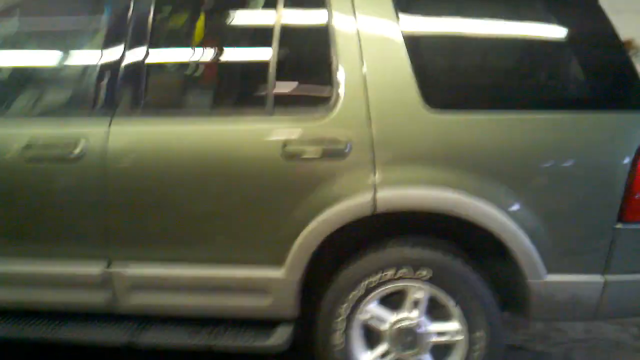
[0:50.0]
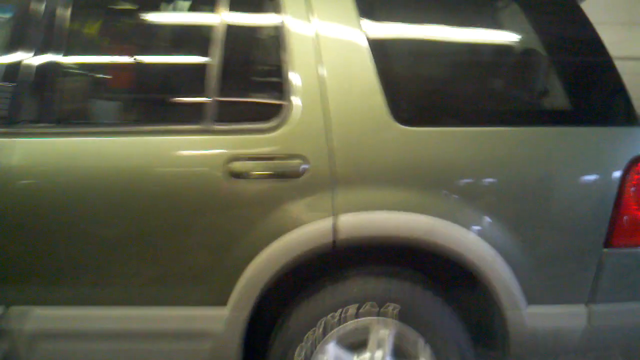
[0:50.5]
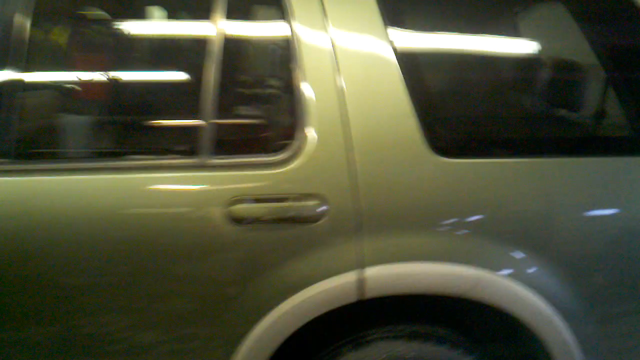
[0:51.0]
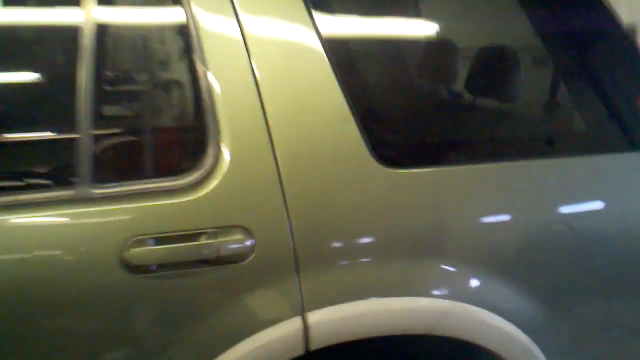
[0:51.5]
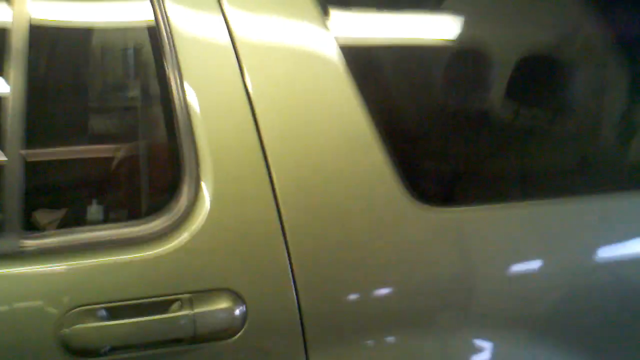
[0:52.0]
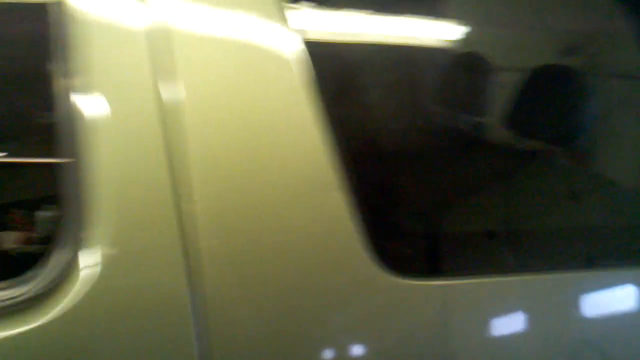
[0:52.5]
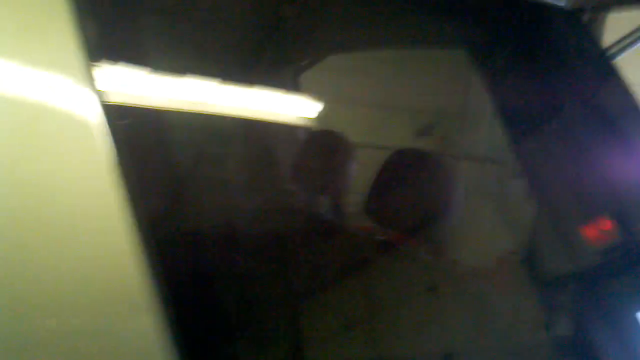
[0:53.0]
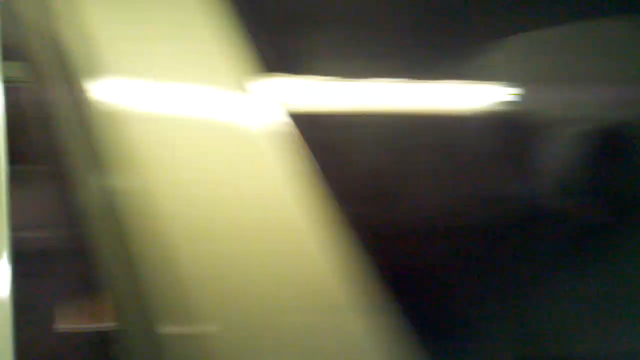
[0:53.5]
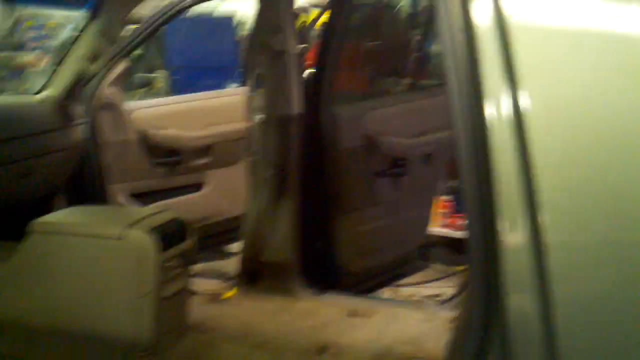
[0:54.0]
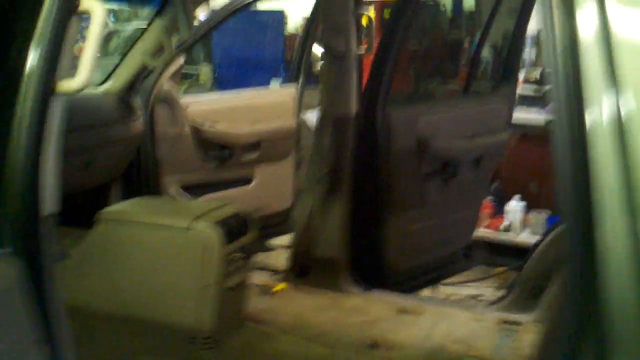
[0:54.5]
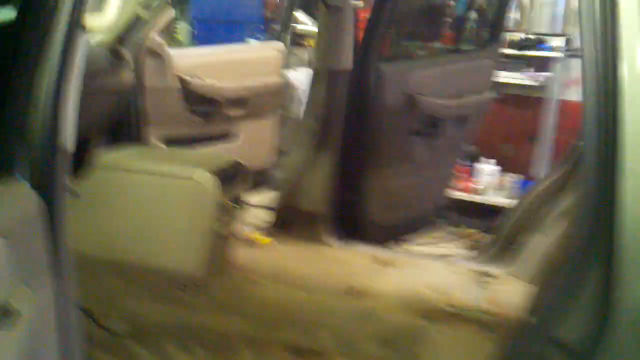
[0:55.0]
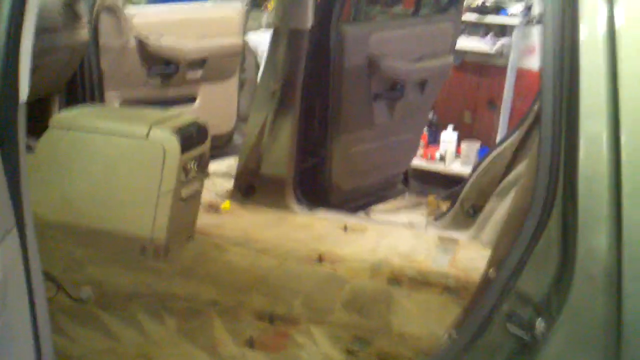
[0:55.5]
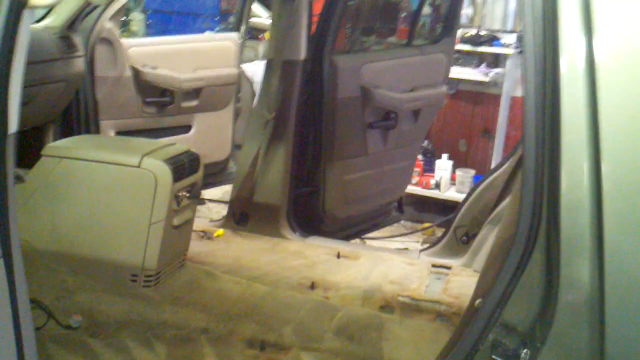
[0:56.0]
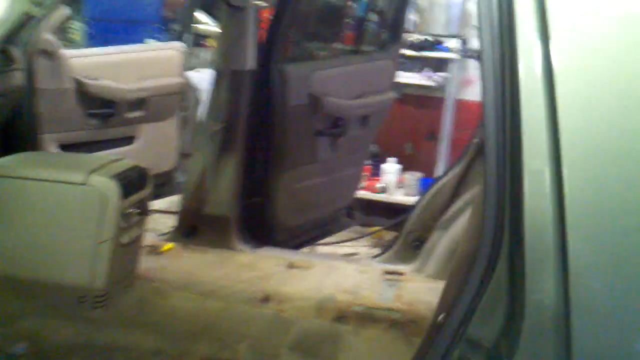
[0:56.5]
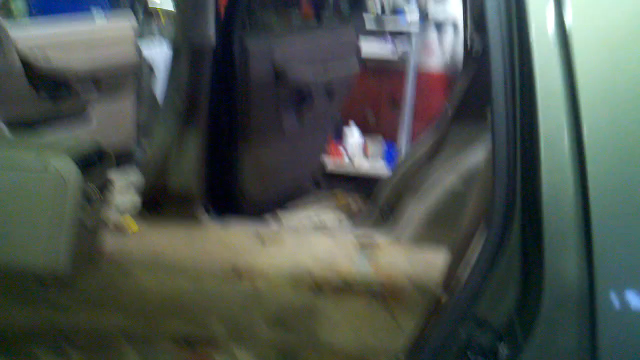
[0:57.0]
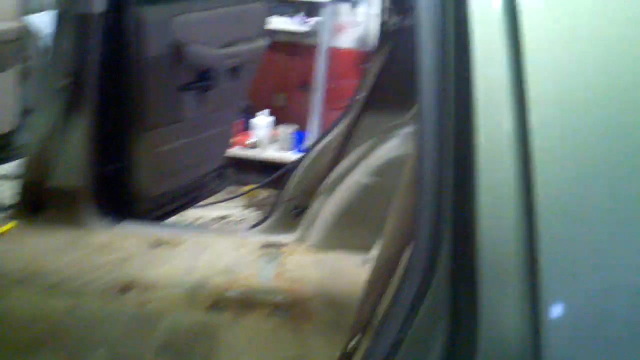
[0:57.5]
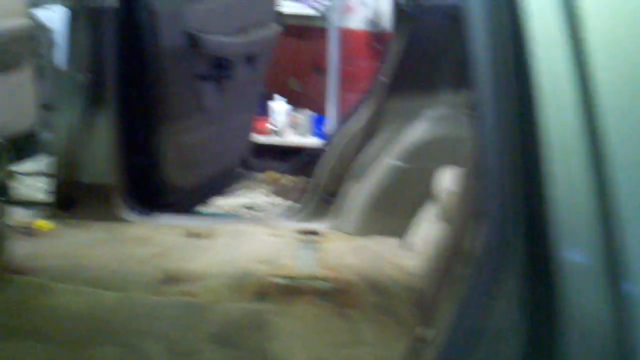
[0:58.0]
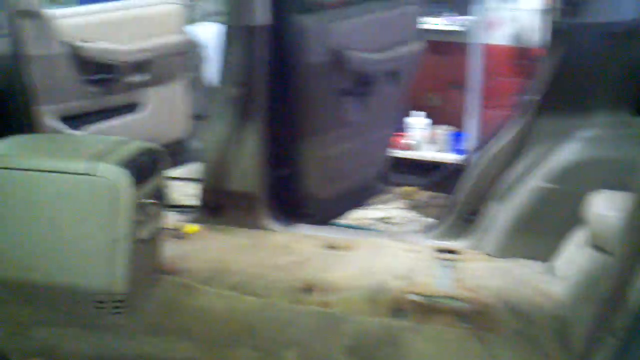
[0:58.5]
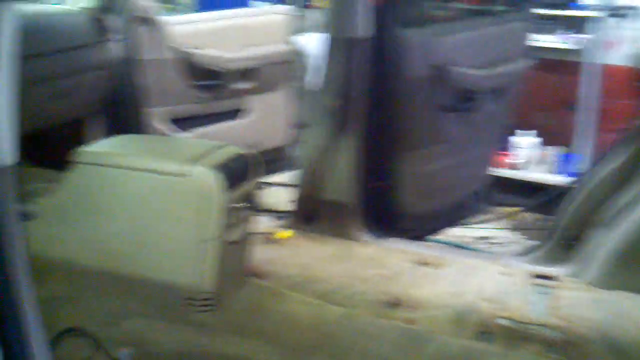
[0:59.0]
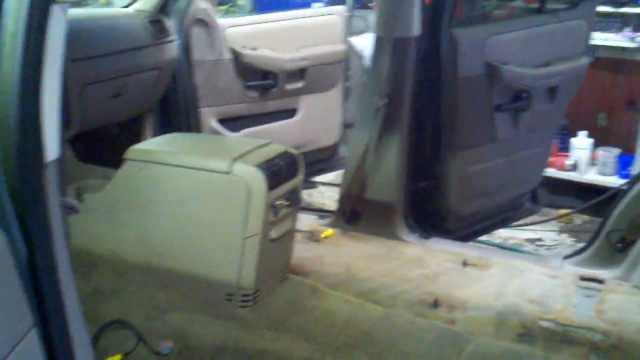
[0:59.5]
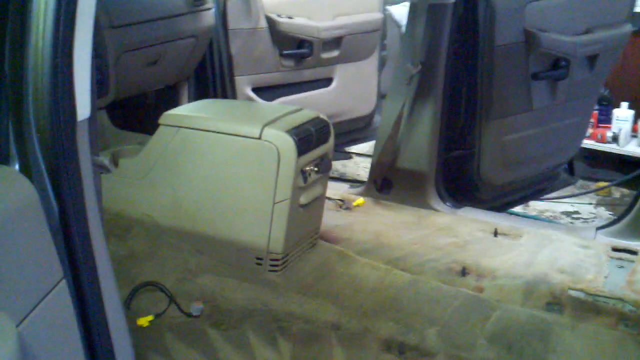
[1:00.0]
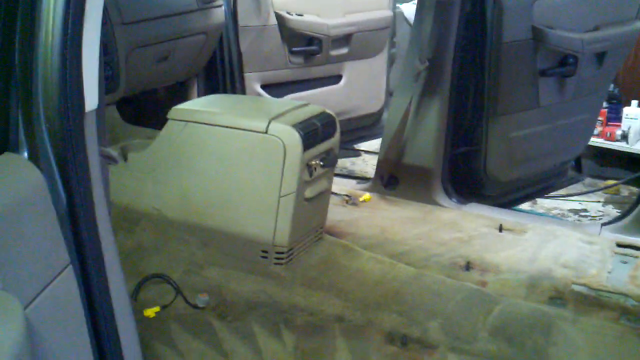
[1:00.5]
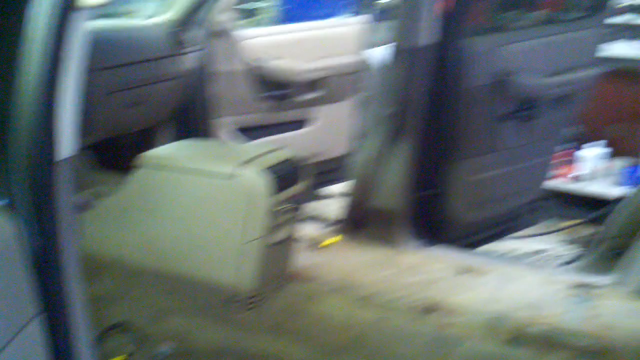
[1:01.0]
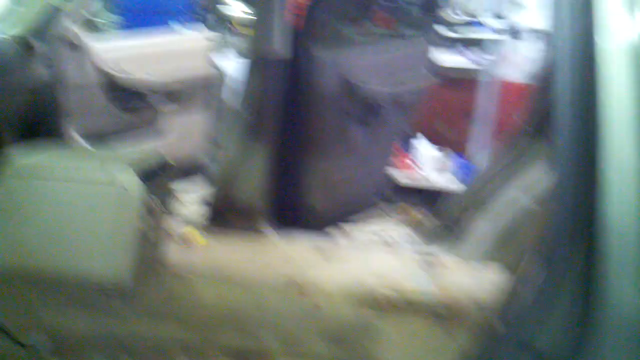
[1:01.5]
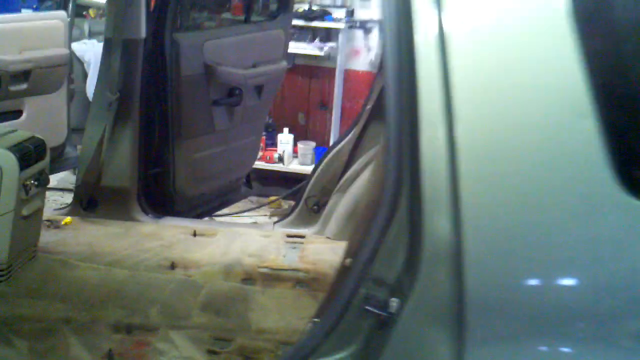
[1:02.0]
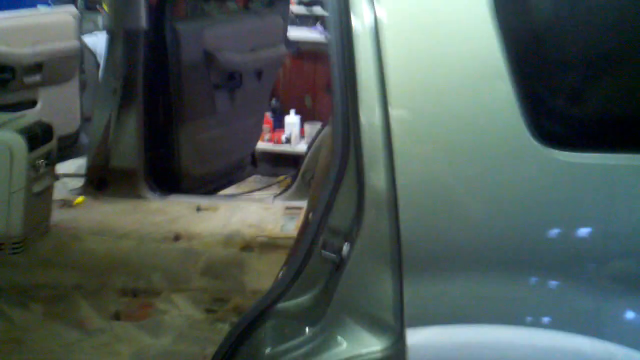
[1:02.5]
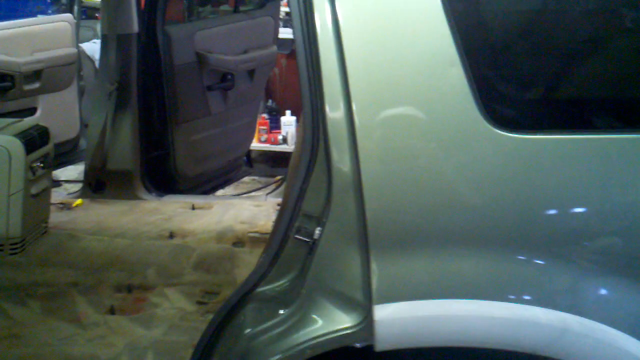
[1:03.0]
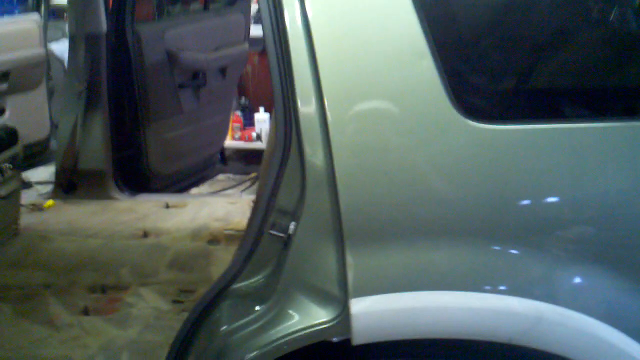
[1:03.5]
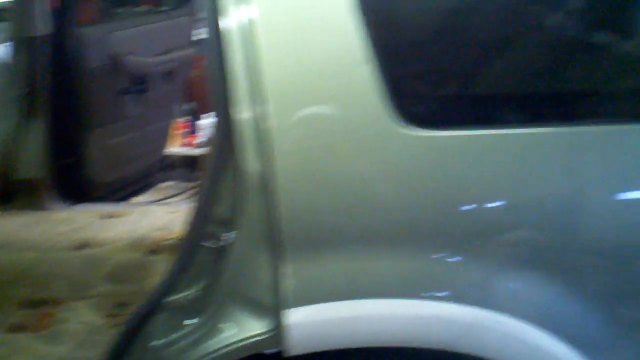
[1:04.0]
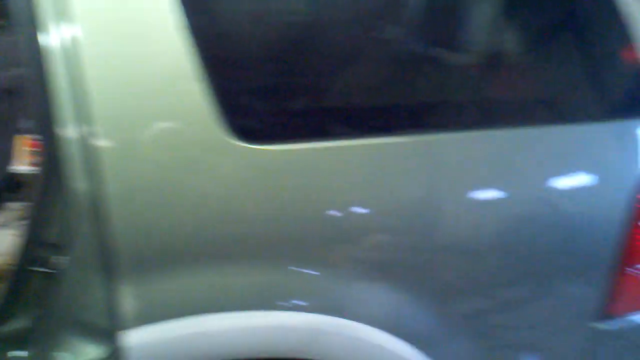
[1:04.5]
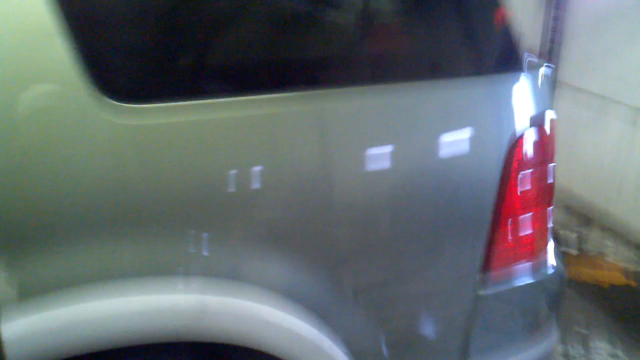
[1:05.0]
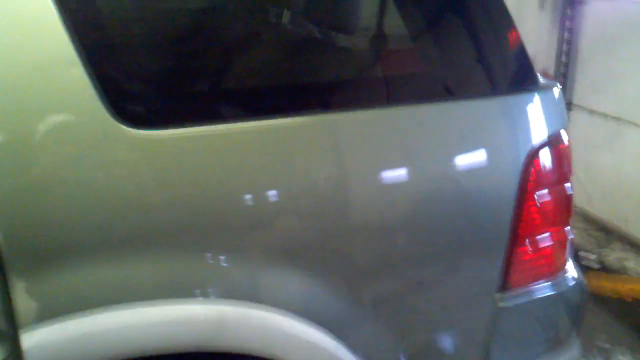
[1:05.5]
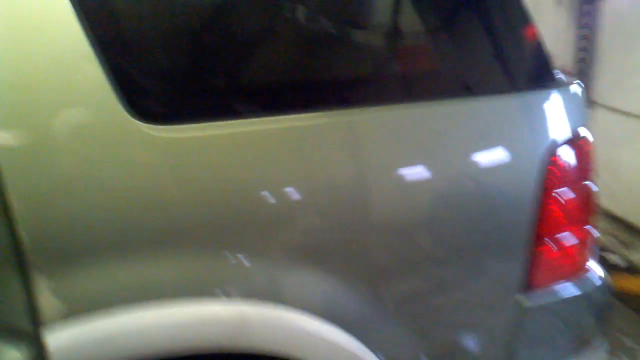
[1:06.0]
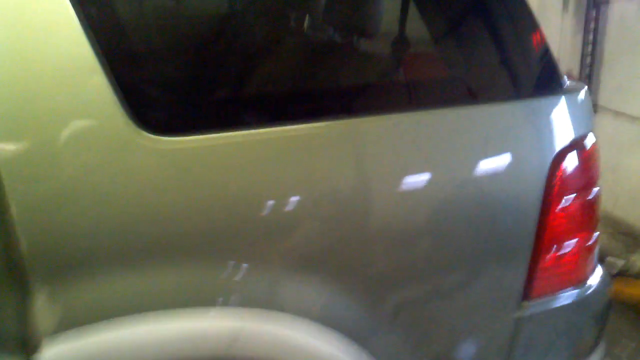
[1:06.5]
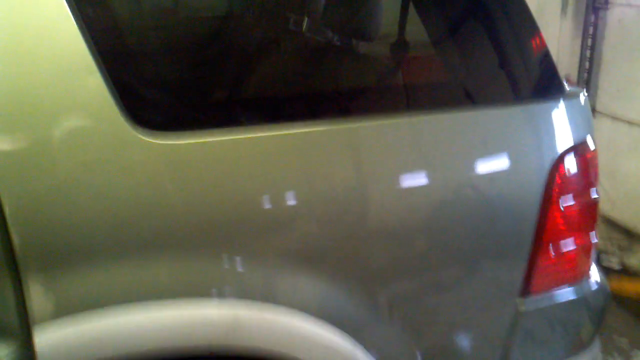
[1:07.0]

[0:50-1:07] A green SUV is inside an automotive shop, possibly a detail shop for cars. Its back passenger door is opened, revealing that the interior has been completely removed: all the seating has been taken out and it is stripped all the way down to the carpet. The vehicle appears to be in the middle of a very thorough deep cleaning, with the large vacuum seemingly used on the carpet and producing the very dirty-looking water.